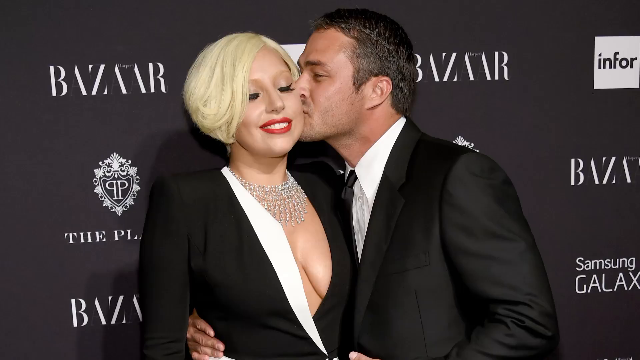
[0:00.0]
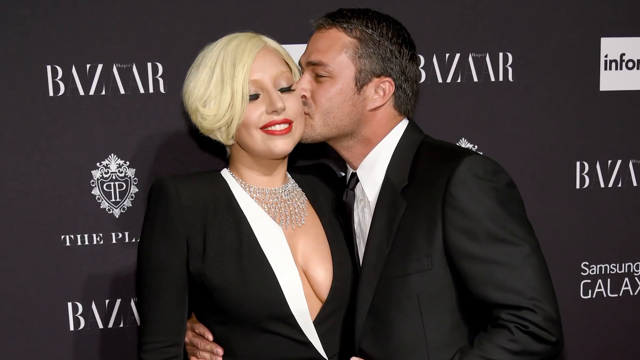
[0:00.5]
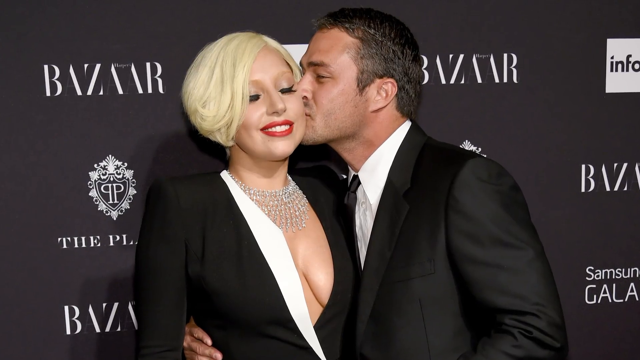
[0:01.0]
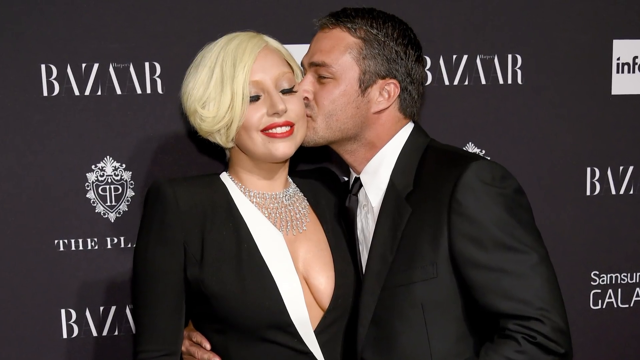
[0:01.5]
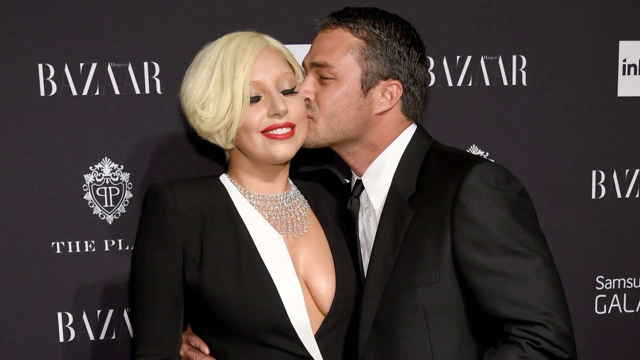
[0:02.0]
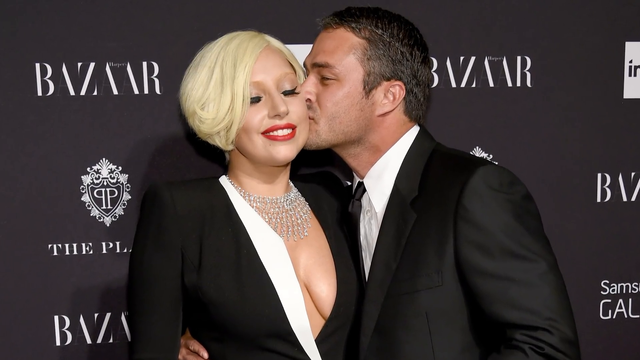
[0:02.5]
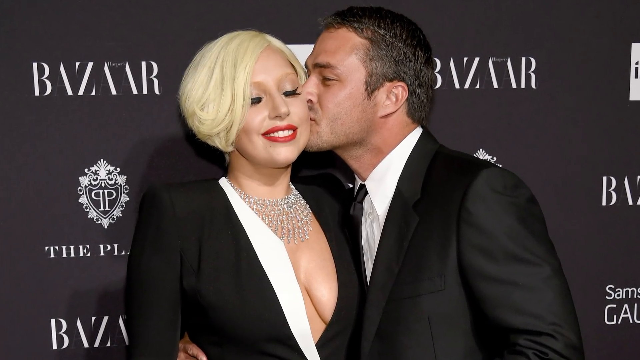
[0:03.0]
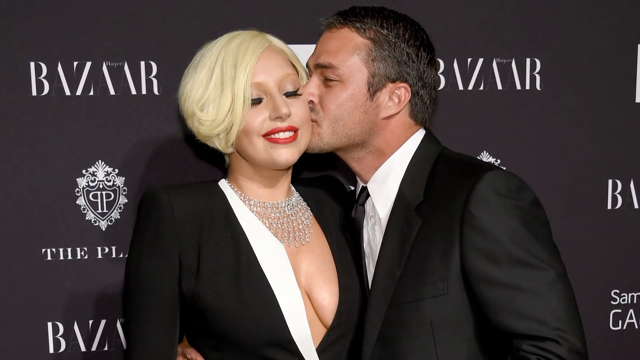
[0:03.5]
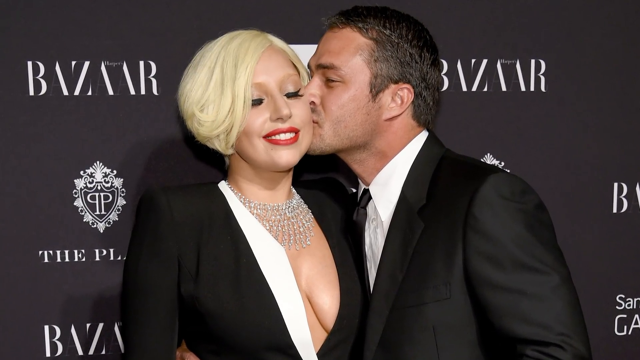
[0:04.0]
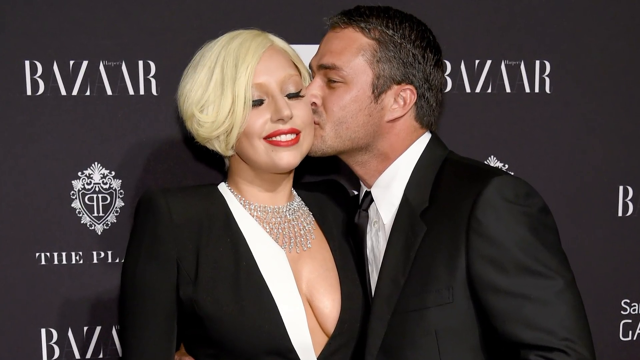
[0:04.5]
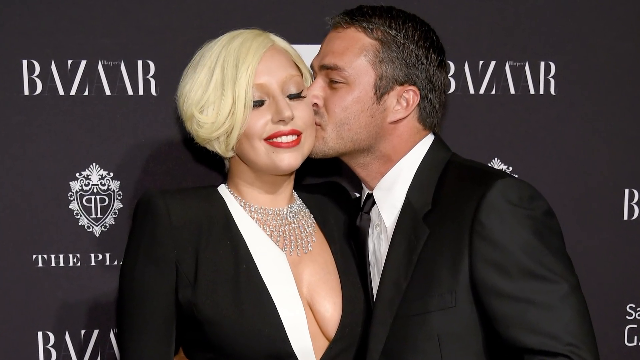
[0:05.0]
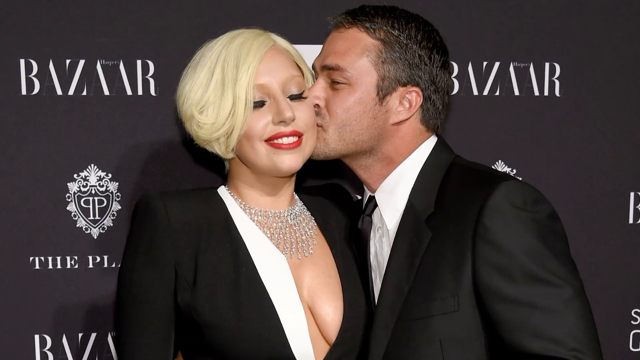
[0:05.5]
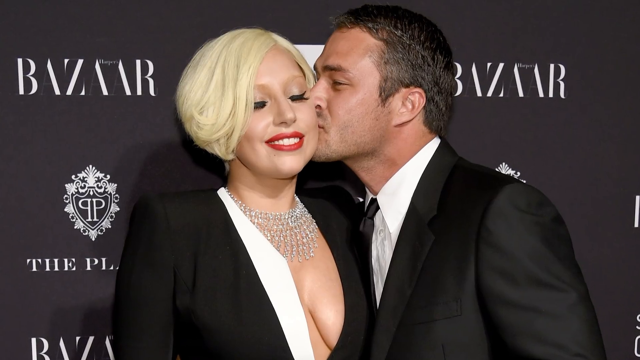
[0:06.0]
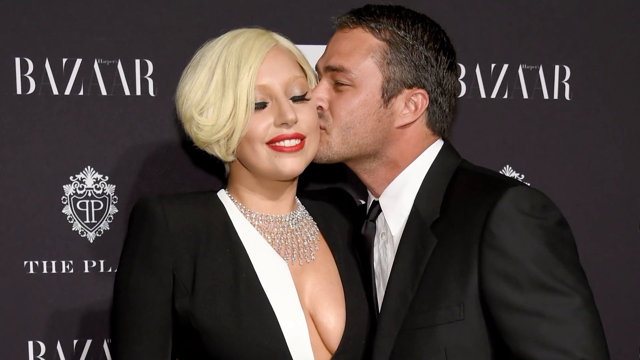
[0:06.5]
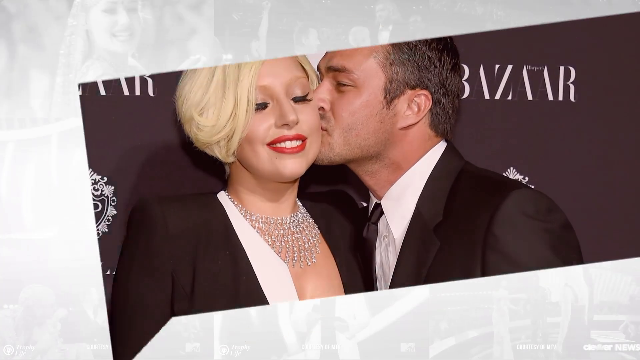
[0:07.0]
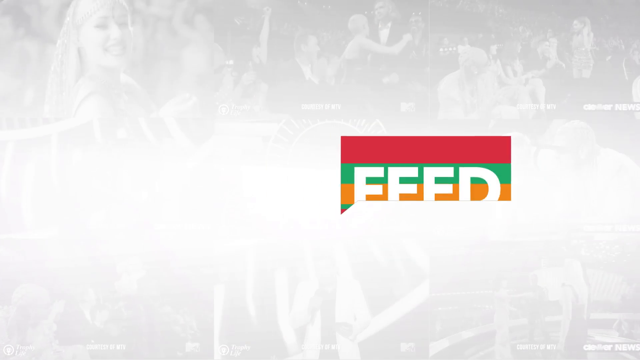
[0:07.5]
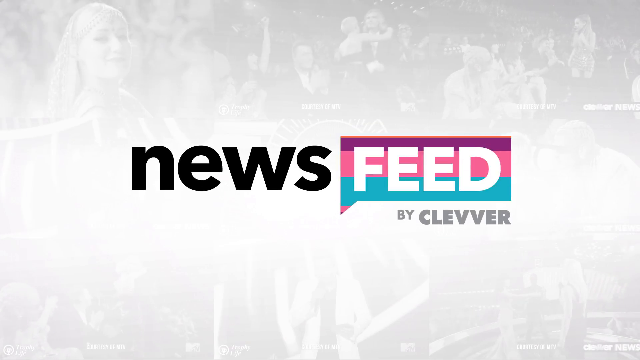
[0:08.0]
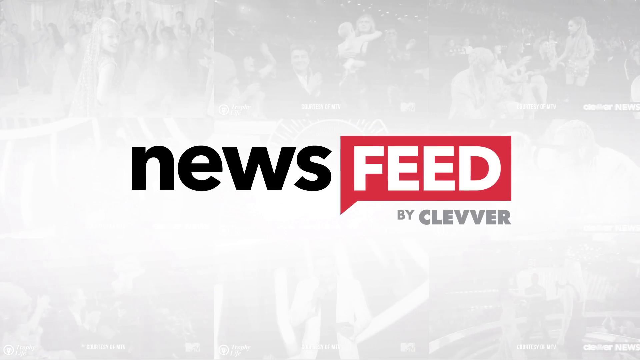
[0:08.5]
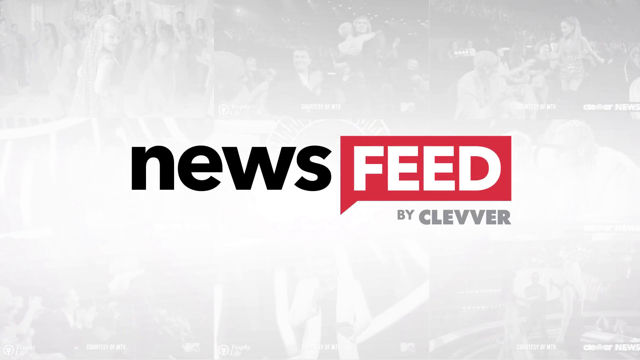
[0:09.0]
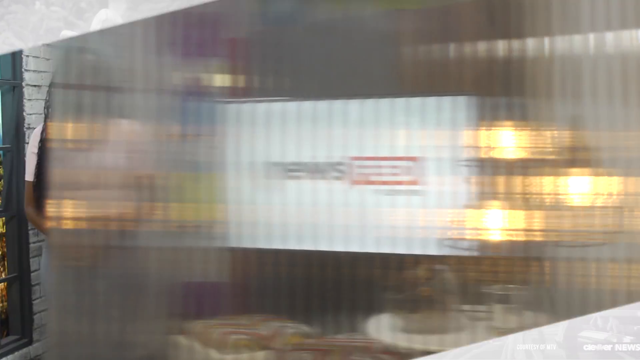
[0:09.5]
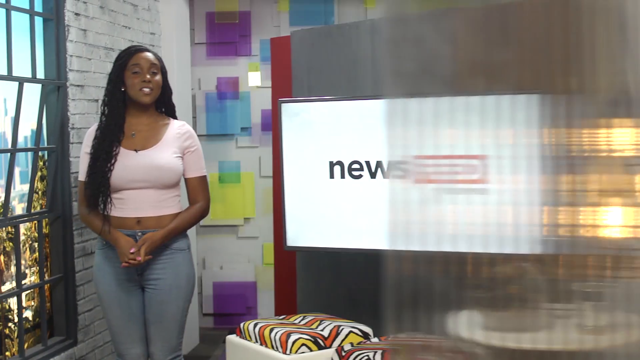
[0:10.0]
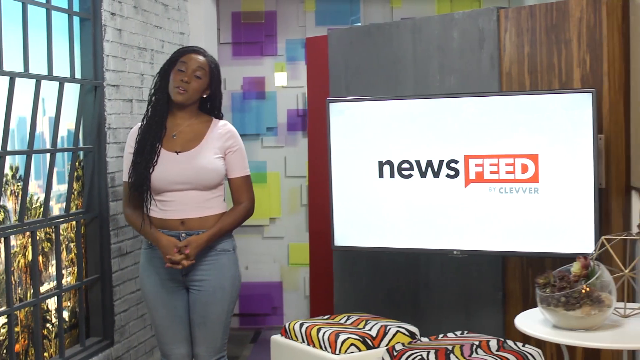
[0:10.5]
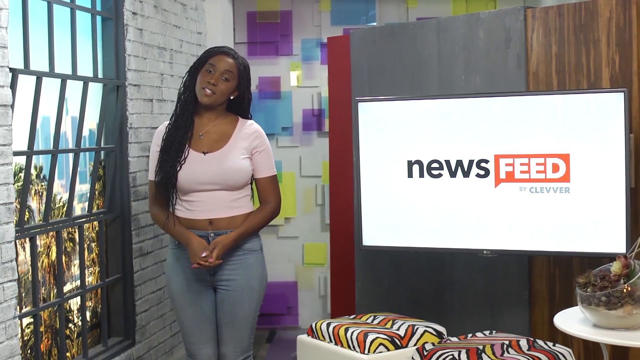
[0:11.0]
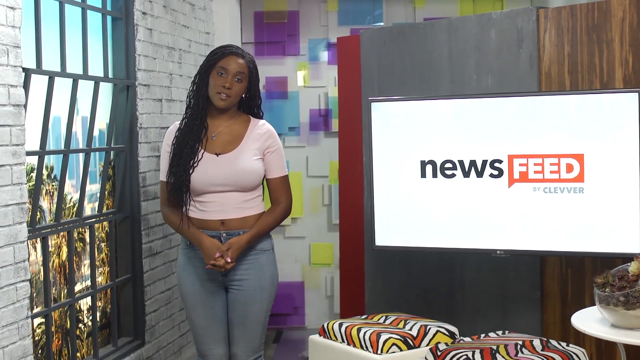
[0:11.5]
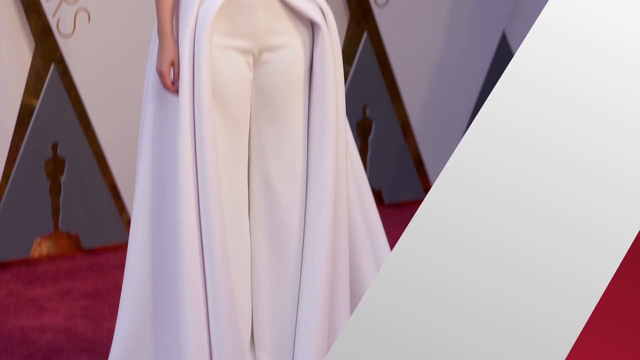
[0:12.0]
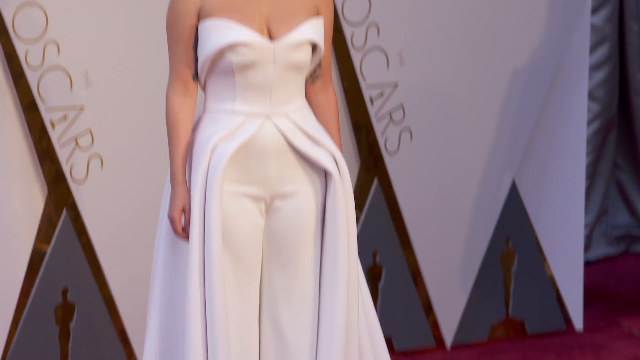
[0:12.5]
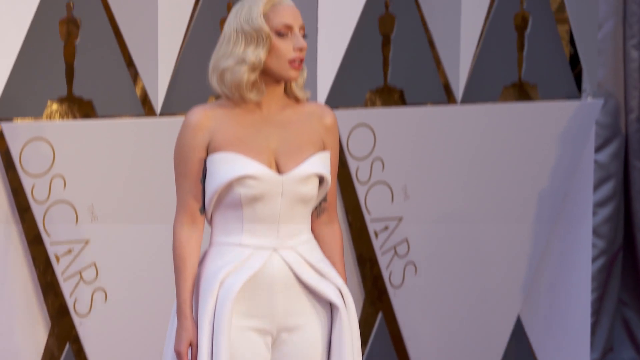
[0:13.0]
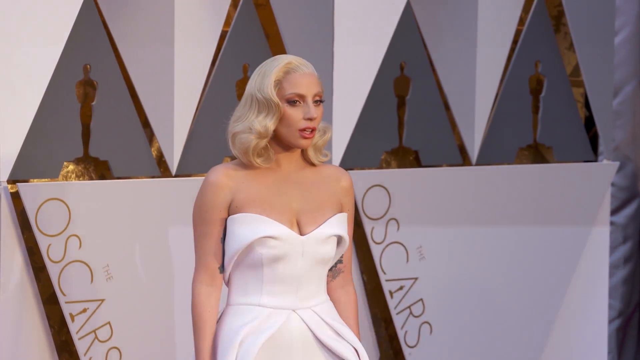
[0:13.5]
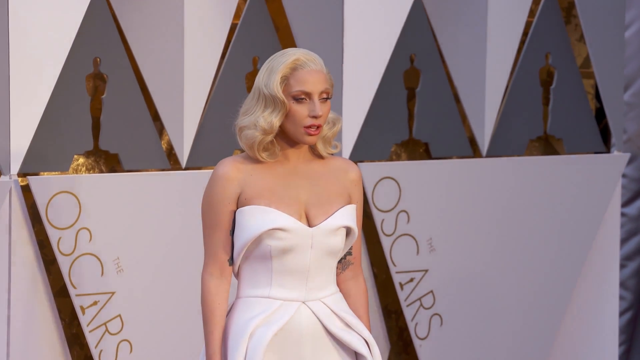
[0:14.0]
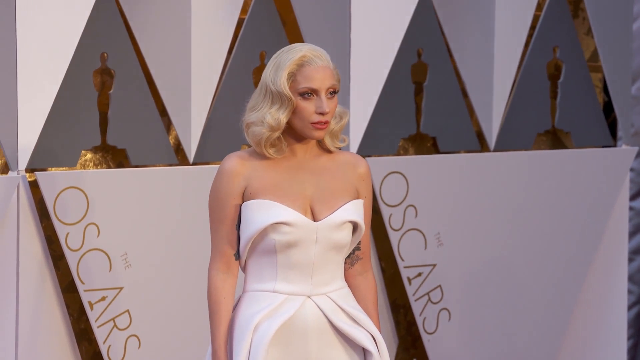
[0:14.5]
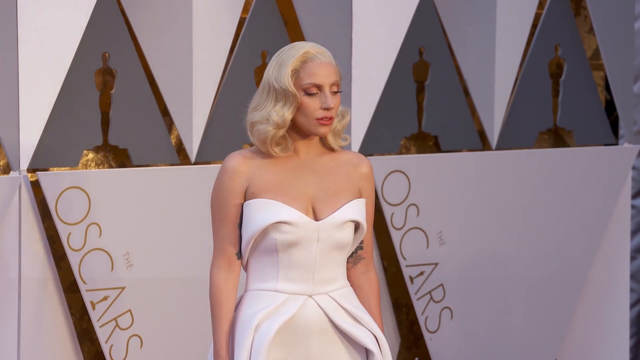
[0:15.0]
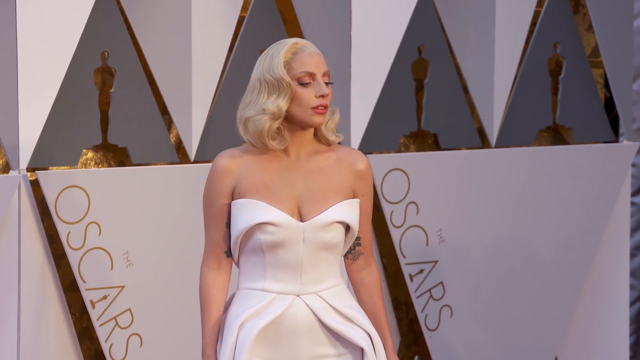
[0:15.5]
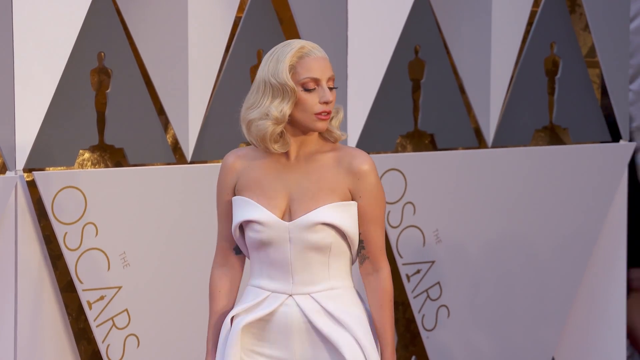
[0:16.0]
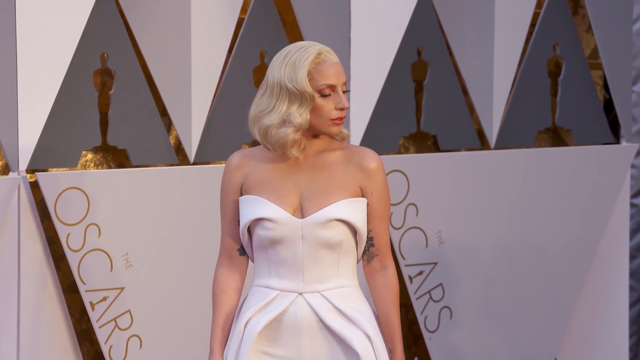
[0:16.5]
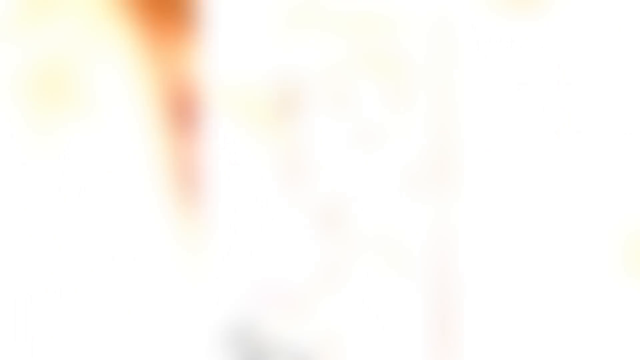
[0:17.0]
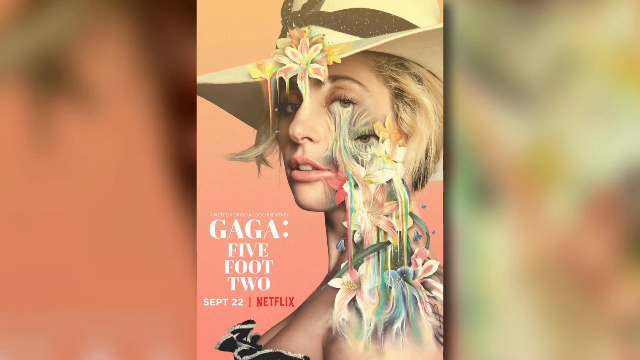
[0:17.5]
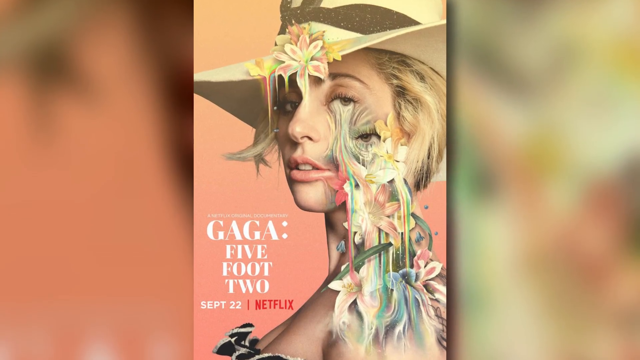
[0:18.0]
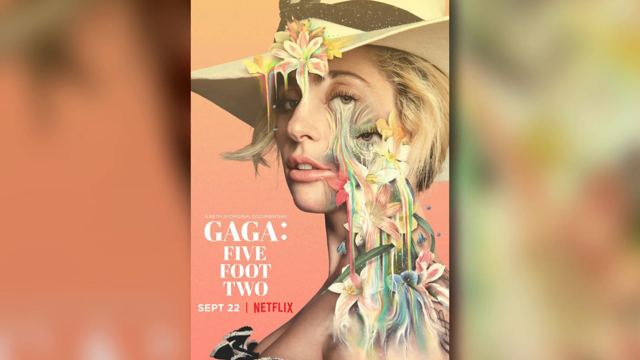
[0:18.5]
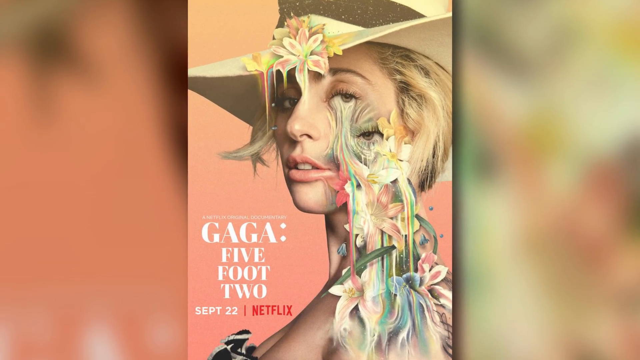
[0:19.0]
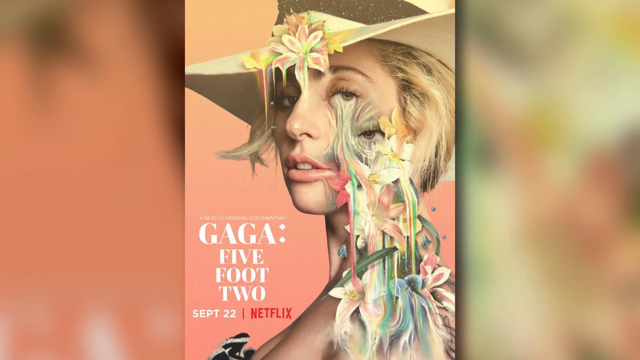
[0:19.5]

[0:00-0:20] The video opens with a still image of two people, a woman on the left and a man on the right. The woman wears a black blazer with a white shirt, an extravagant necklace, and very heavy red lipstick, and she has very blonde hair. The man on the right kisses the woman on the cheek; he wears a black suit, a white shirt underneath, and a black tie. Both stand in front of a black wall covered with logos for various companies, such as Bazaar and Samsung Galaxy, and they are posing for a photo shoot. The screen then changes to a transition screen with the logo for the segment, called News Feed by Clever. The scene then cuts to the host, an African-American woman wearing a pink top with blue jeans.